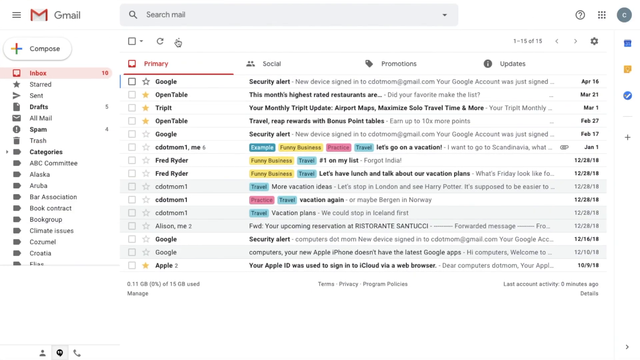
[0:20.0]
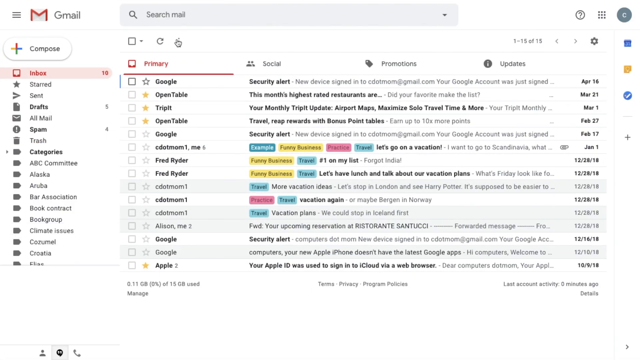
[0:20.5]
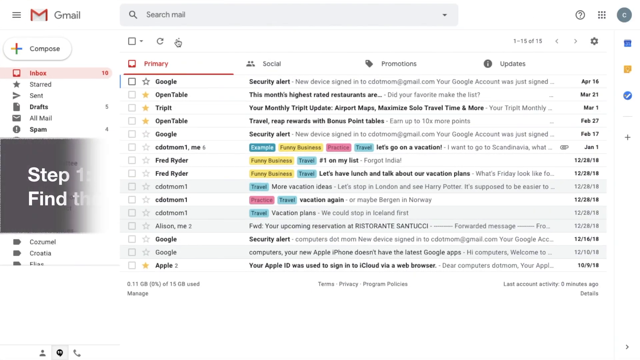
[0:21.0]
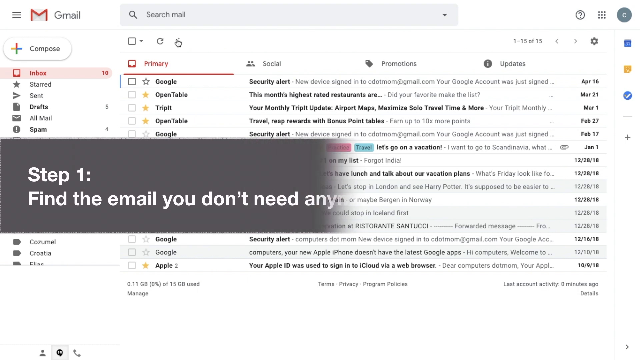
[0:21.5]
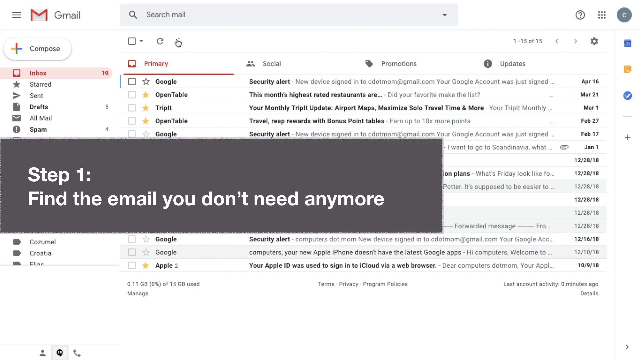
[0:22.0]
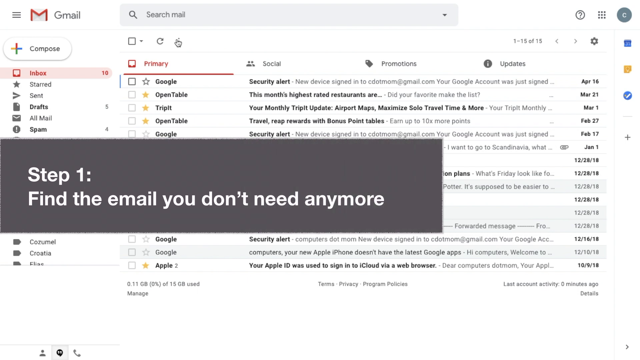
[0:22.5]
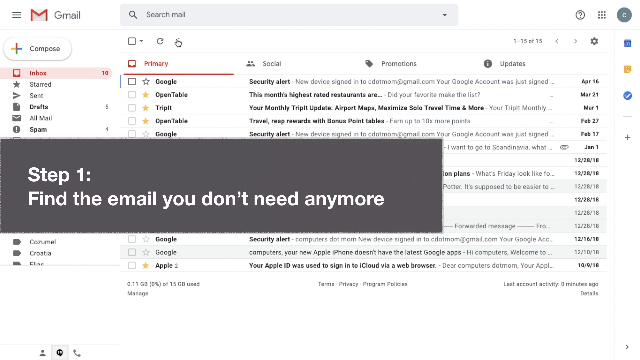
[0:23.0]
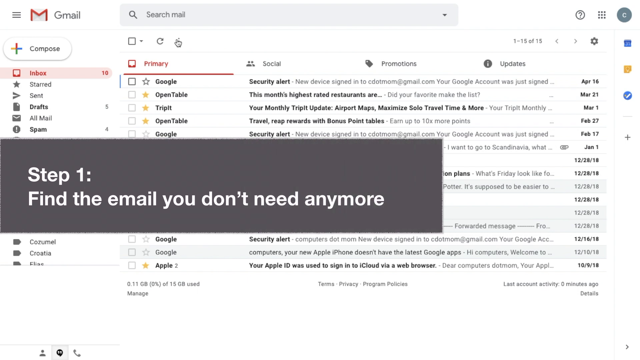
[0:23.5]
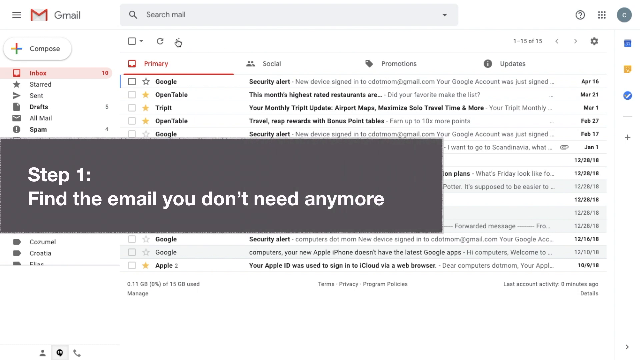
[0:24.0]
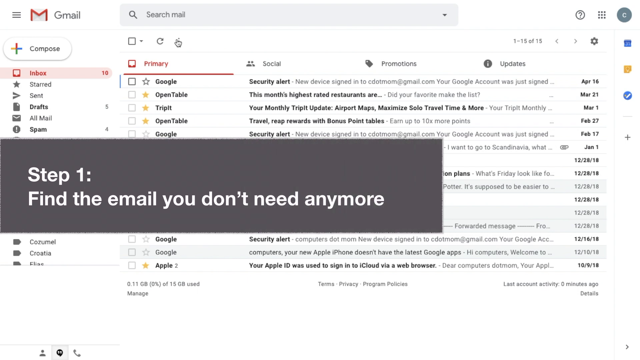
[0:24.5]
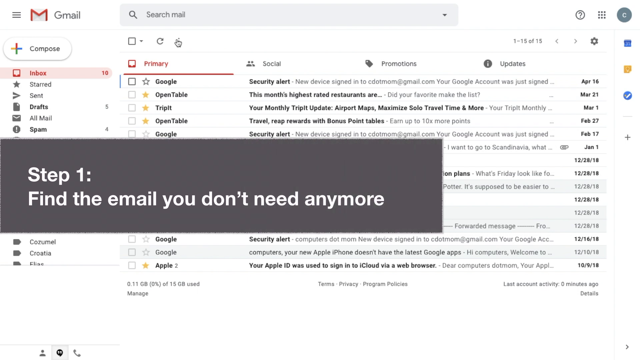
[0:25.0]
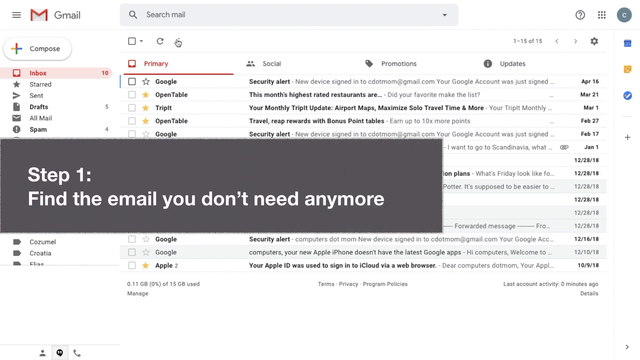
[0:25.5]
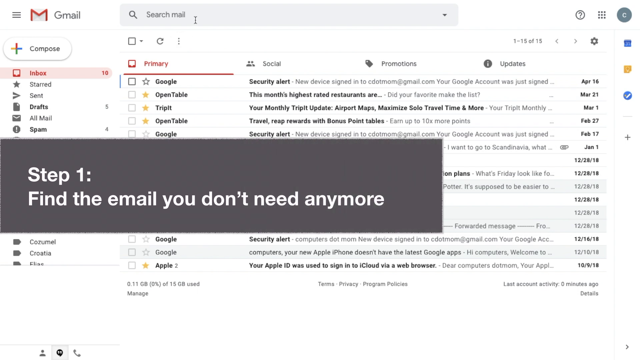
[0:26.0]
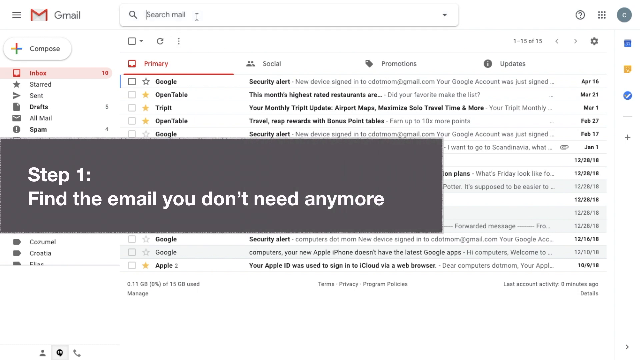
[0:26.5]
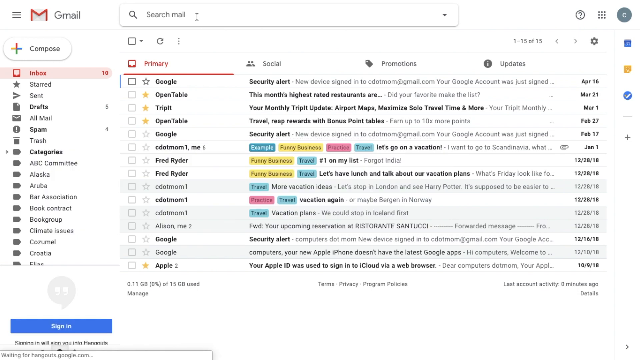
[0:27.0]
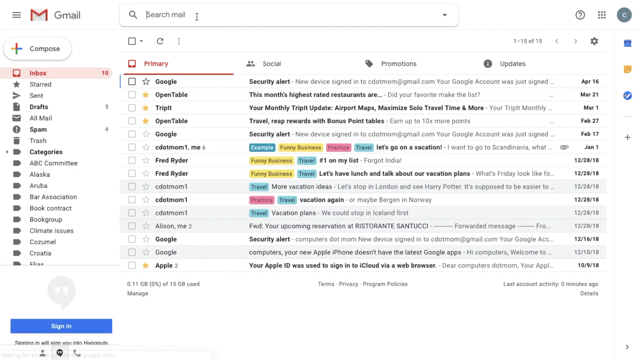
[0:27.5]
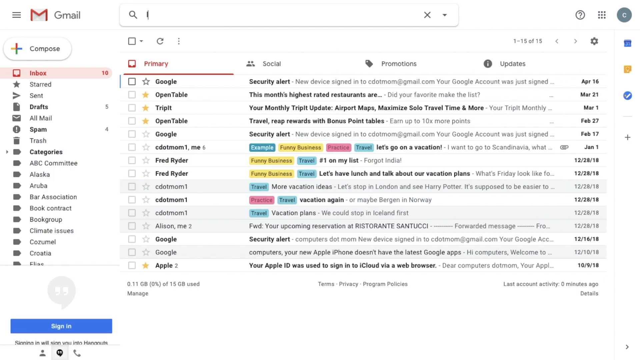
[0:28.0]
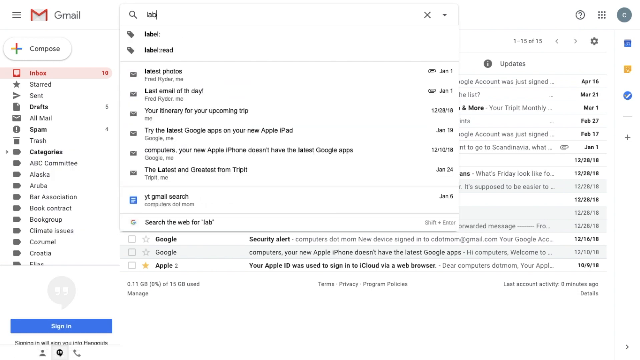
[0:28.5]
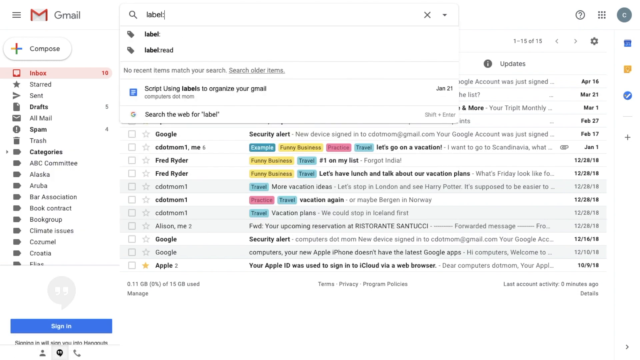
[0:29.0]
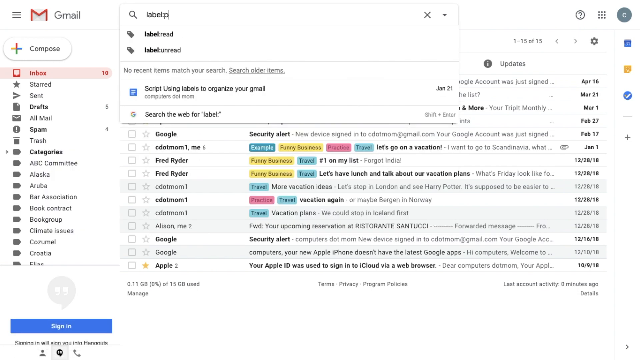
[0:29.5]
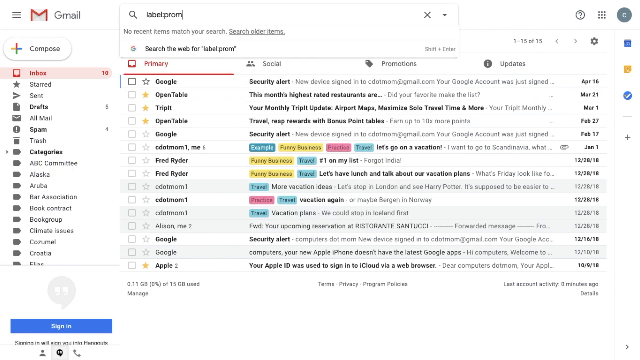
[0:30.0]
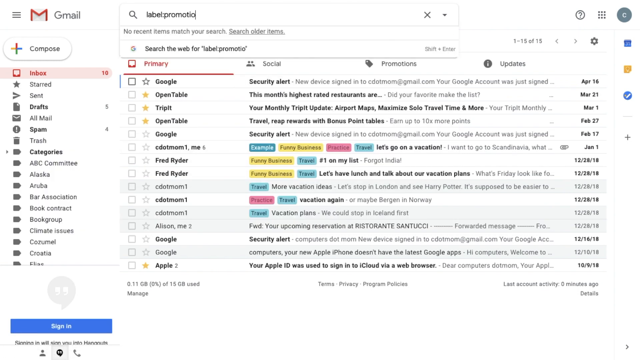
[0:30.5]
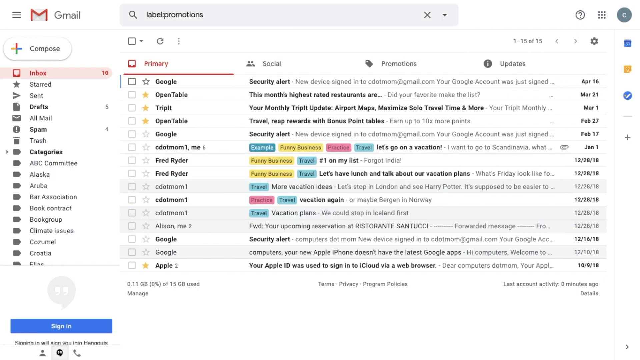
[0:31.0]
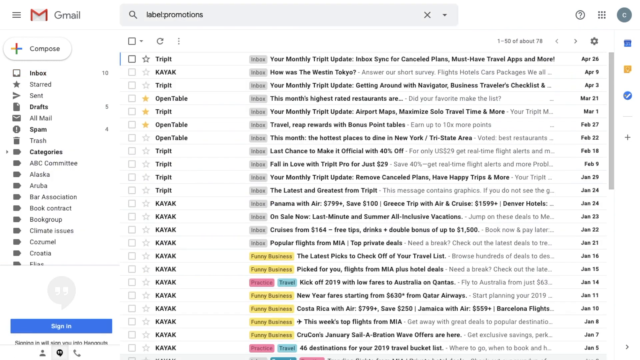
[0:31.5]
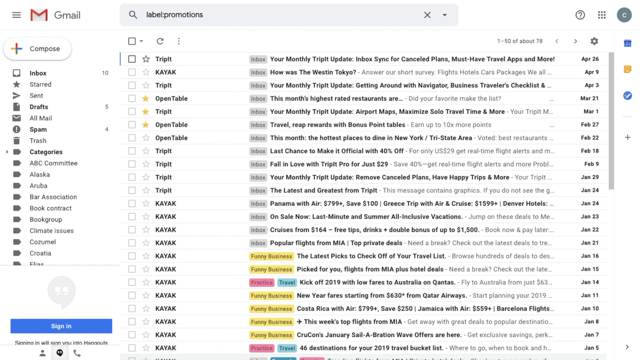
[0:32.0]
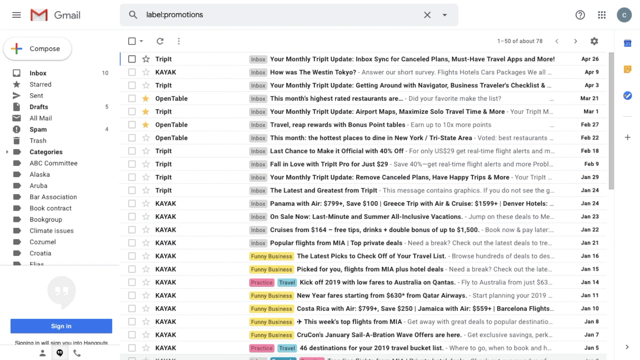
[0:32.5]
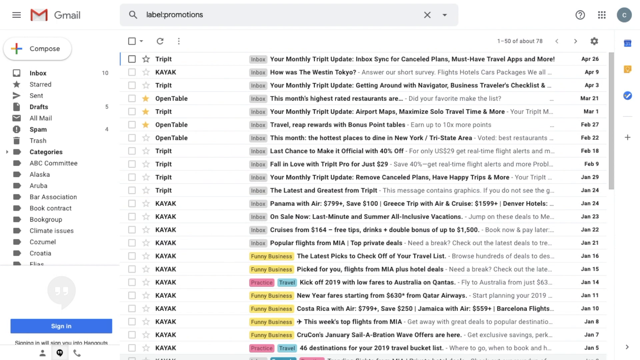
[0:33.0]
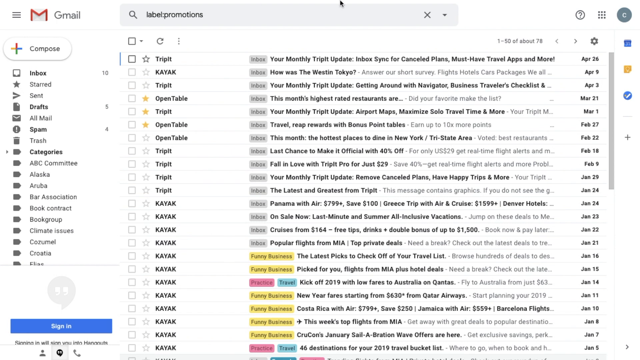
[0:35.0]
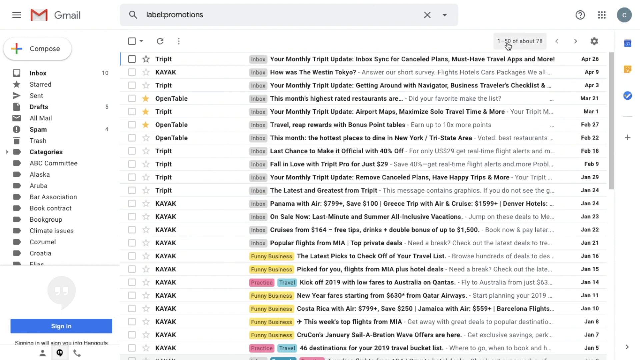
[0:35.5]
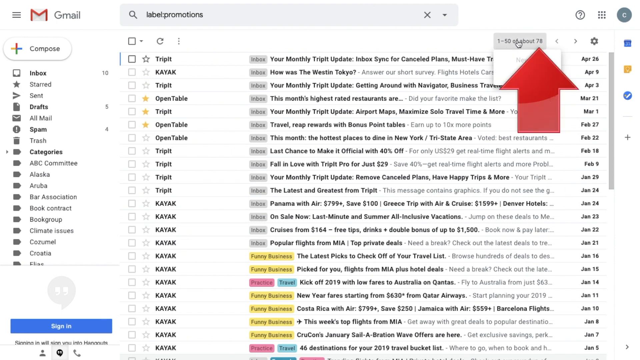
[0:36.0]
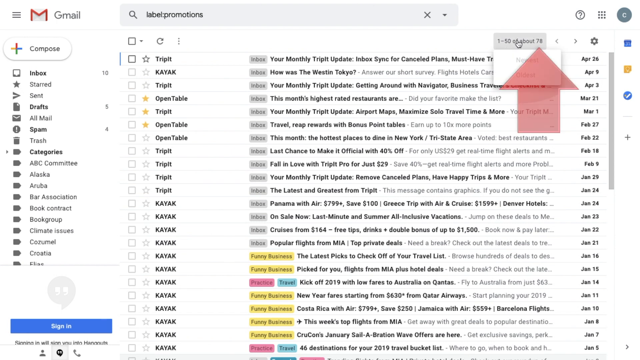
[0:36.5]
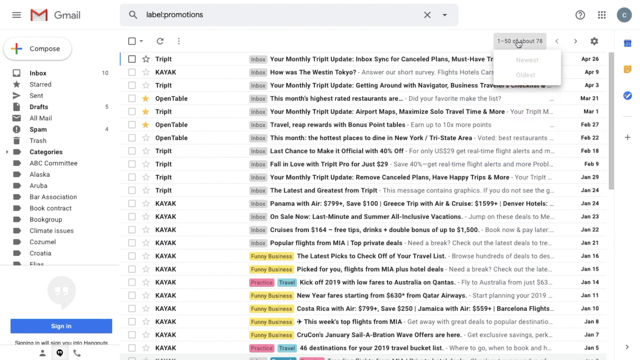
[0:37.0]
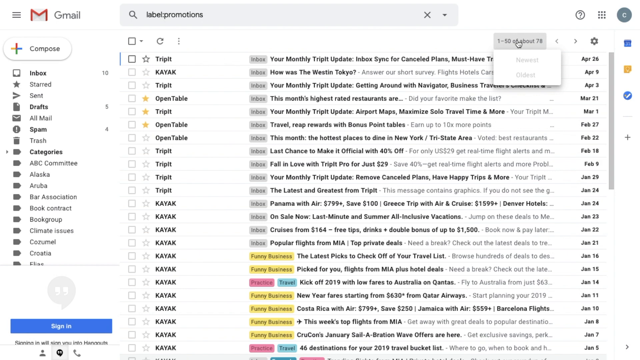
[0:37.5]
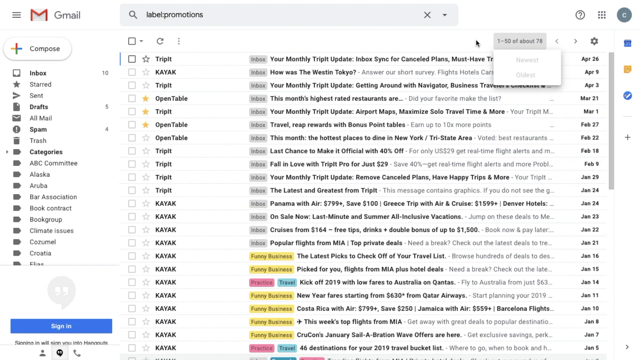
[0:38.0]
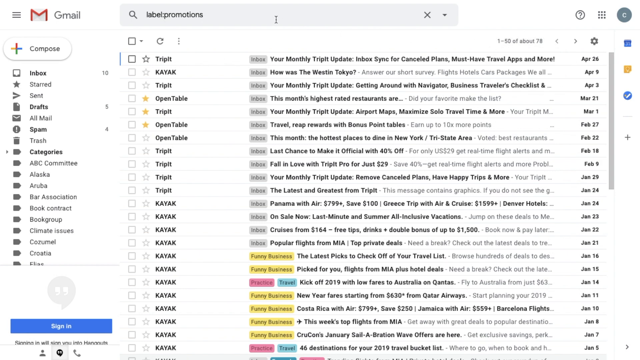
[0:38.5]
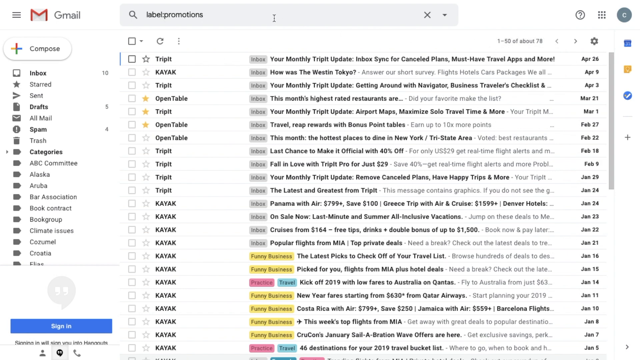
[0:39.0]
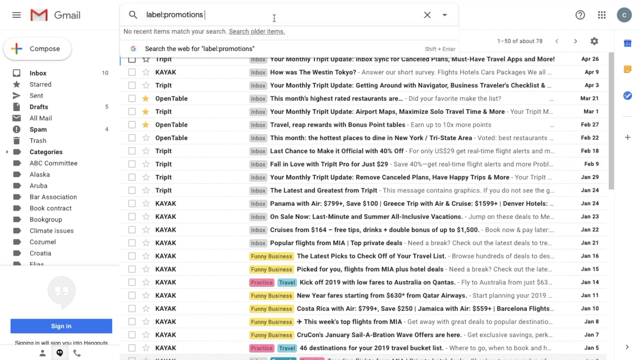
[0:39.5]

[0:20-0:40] The text "Step one, find the email you don't need anymore" appears. A search using the promotion label brings up many emails, and the cursor moves over them. The results include a long list of messages from TripIt, Kayak and Open Table, apparently the ones the person in the video wants to delete.